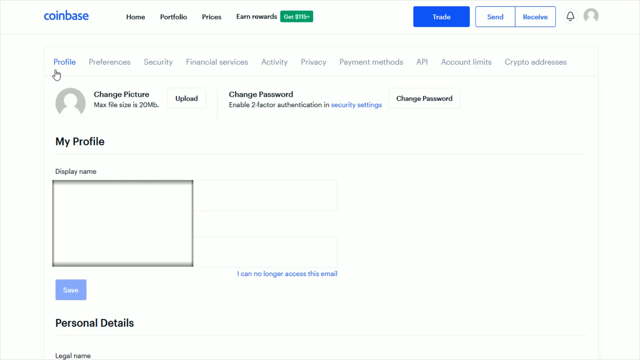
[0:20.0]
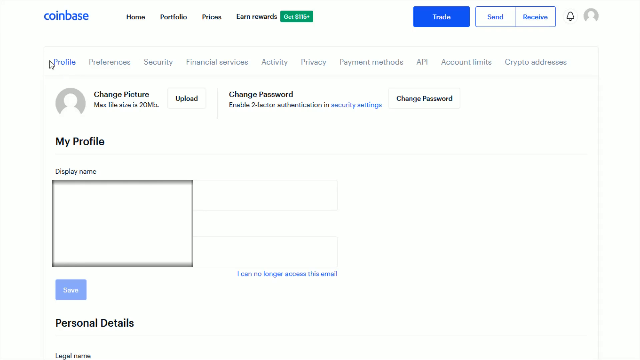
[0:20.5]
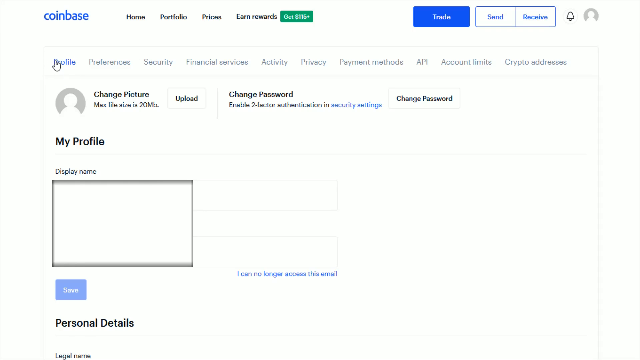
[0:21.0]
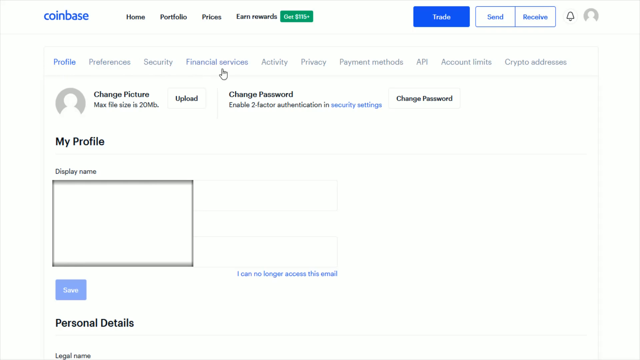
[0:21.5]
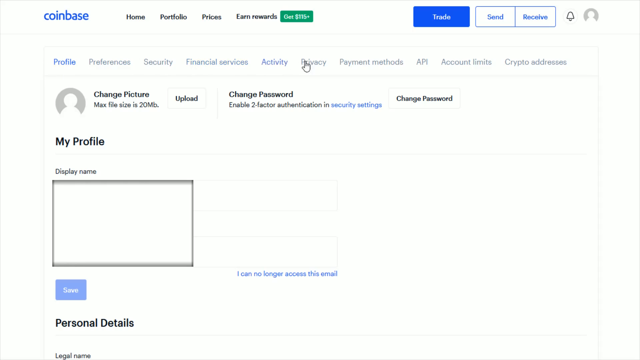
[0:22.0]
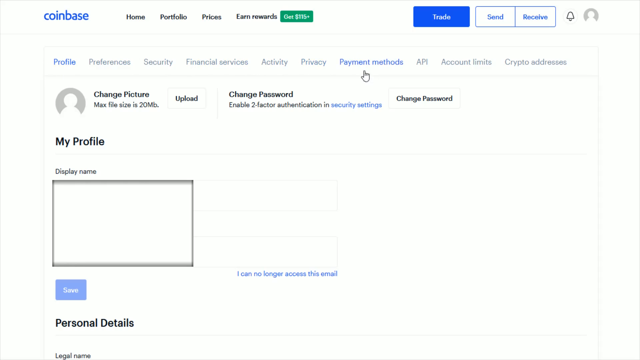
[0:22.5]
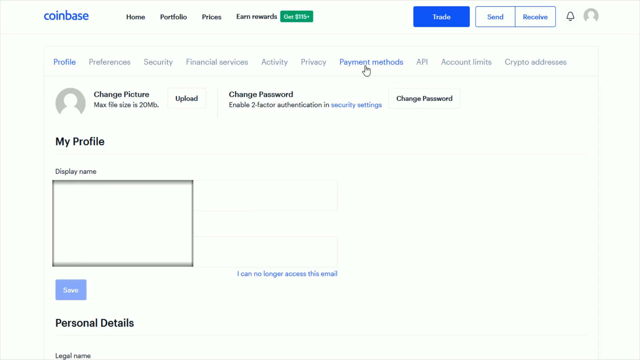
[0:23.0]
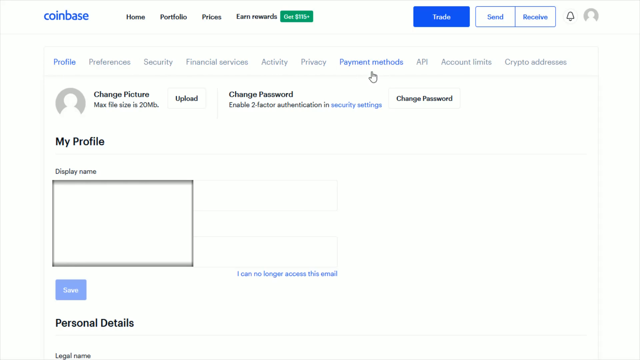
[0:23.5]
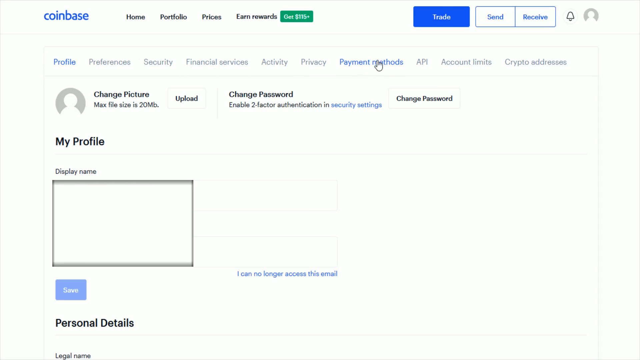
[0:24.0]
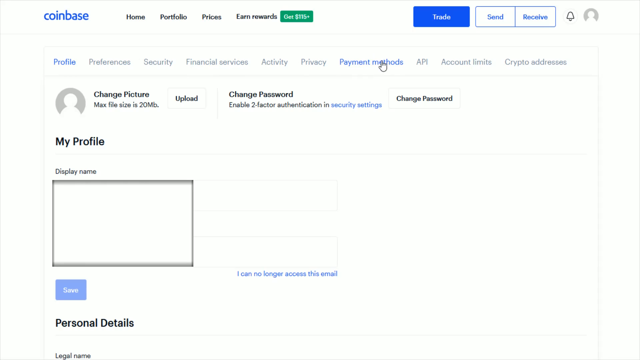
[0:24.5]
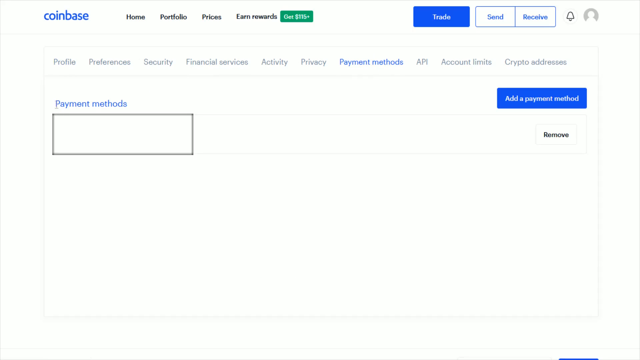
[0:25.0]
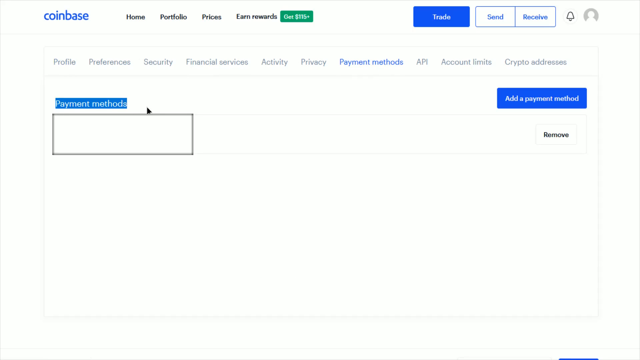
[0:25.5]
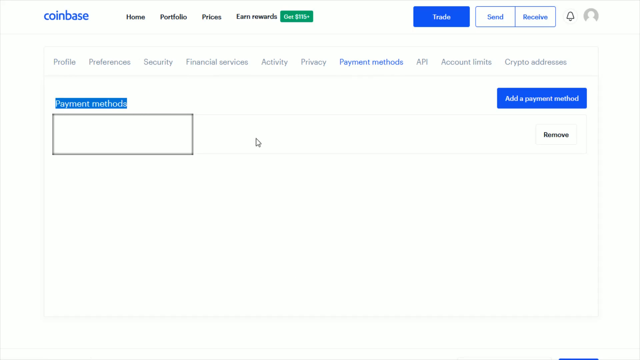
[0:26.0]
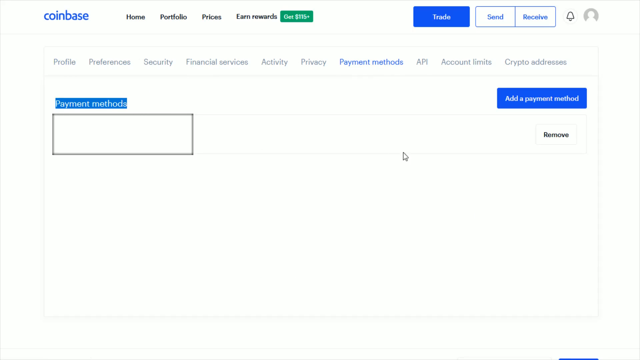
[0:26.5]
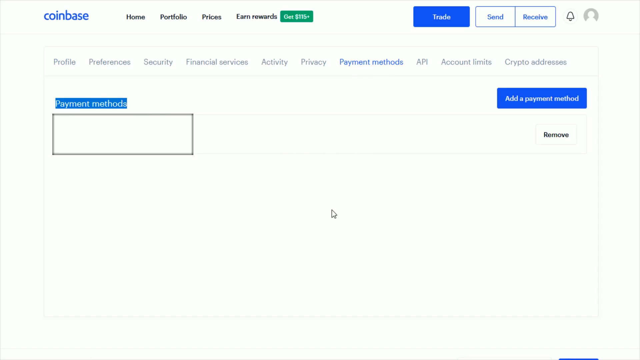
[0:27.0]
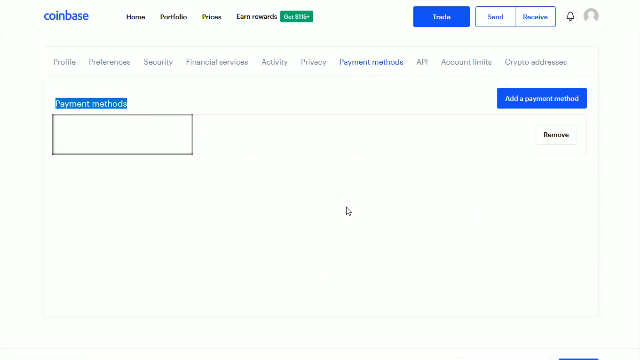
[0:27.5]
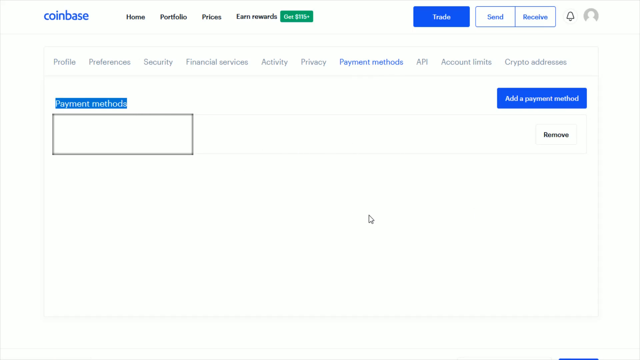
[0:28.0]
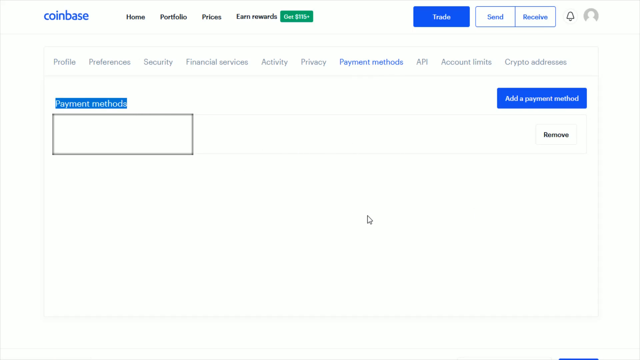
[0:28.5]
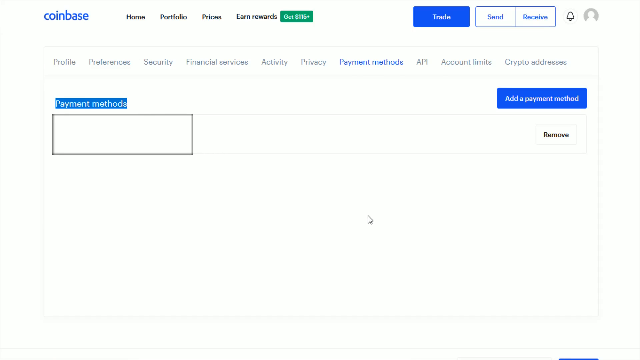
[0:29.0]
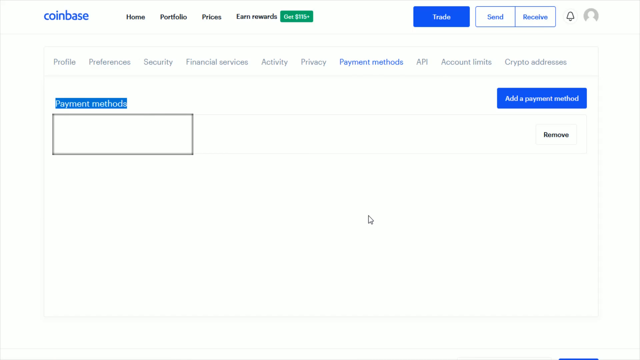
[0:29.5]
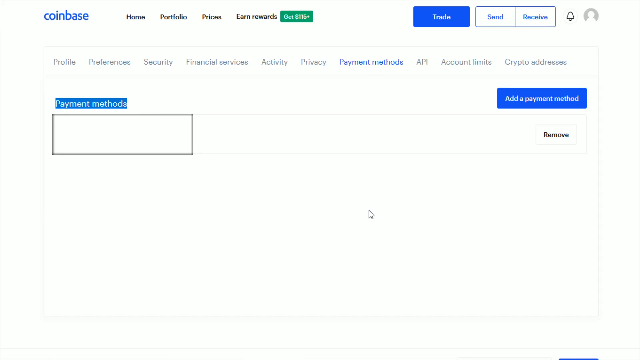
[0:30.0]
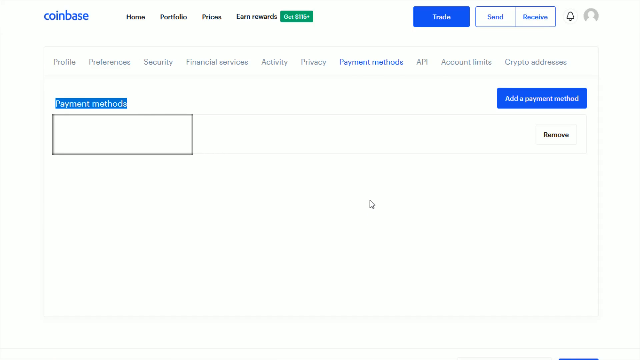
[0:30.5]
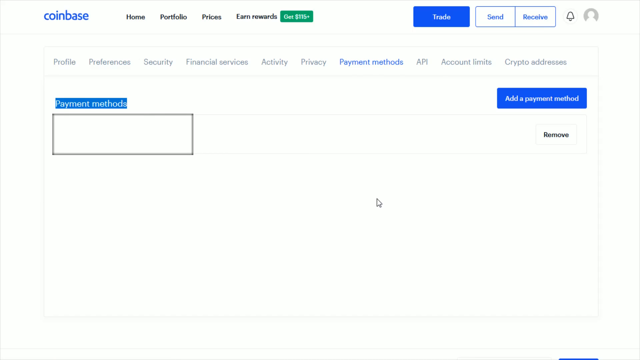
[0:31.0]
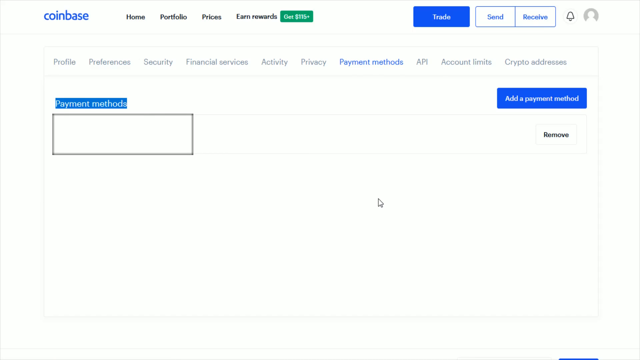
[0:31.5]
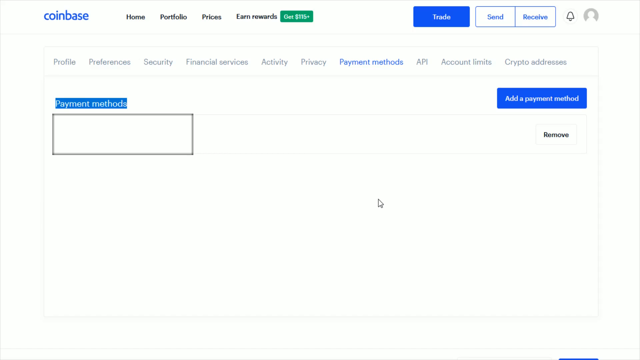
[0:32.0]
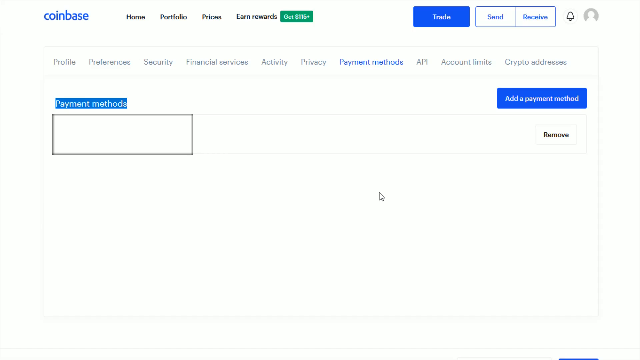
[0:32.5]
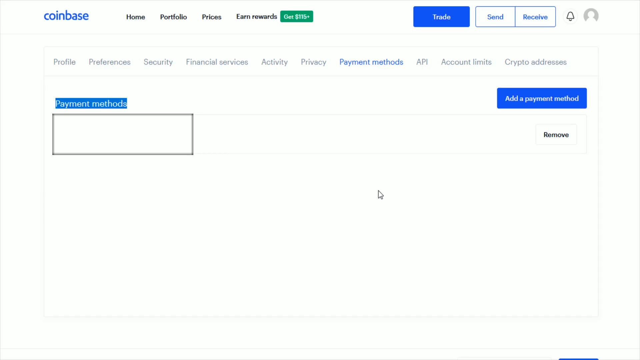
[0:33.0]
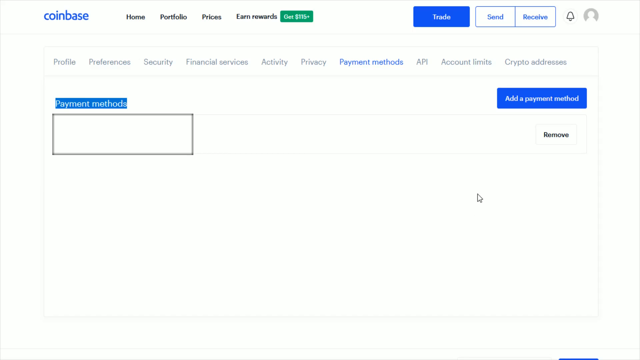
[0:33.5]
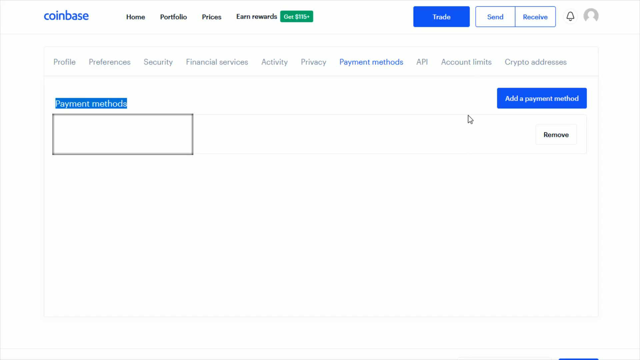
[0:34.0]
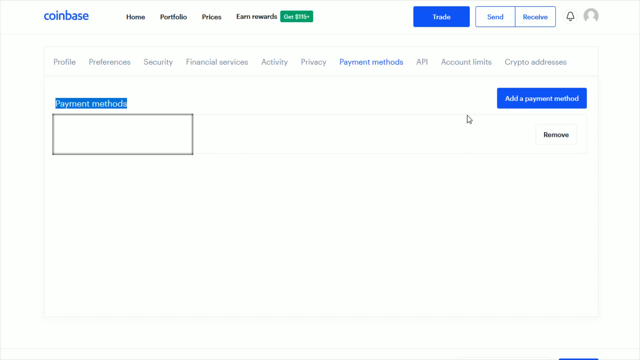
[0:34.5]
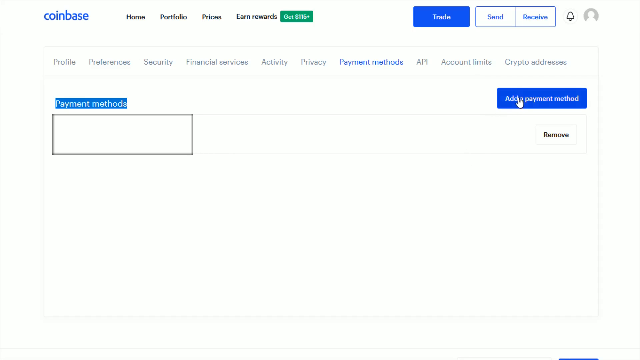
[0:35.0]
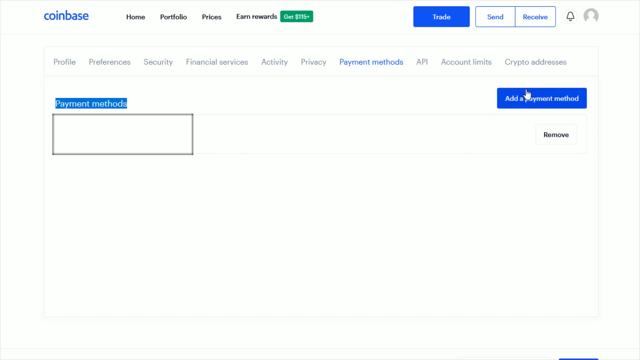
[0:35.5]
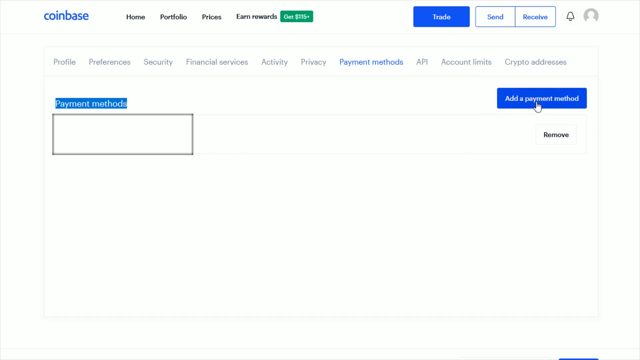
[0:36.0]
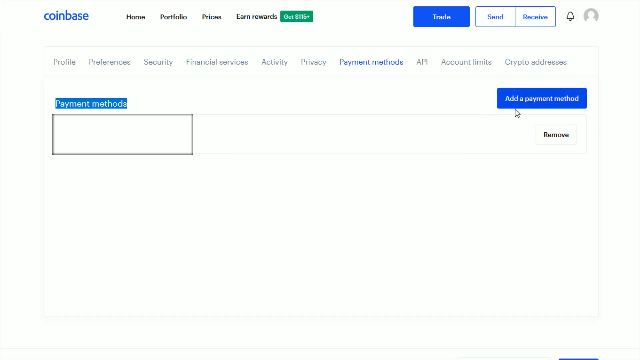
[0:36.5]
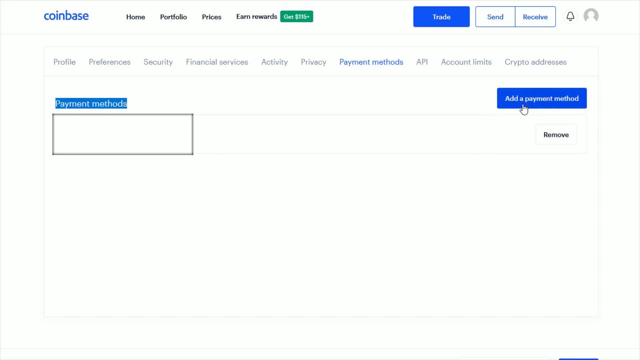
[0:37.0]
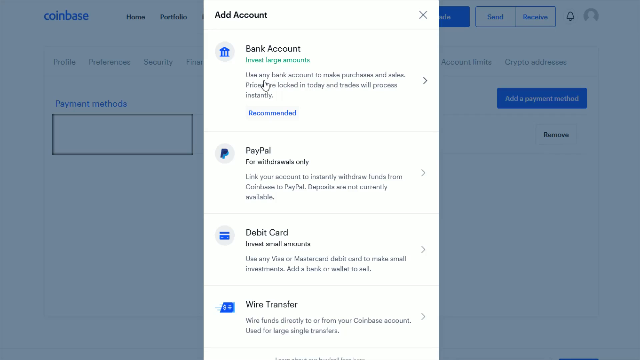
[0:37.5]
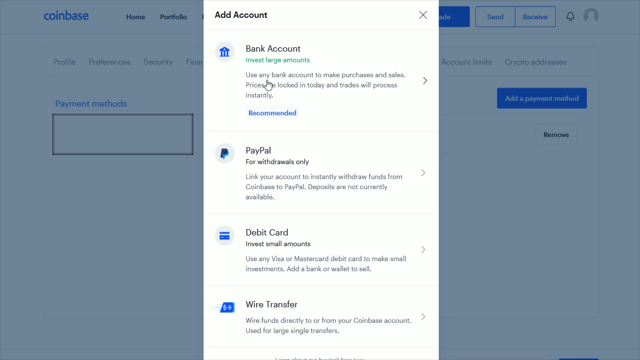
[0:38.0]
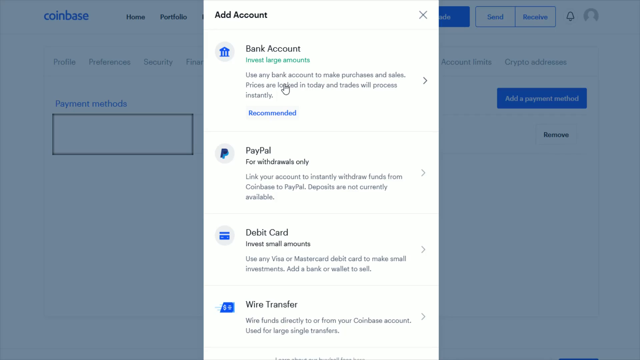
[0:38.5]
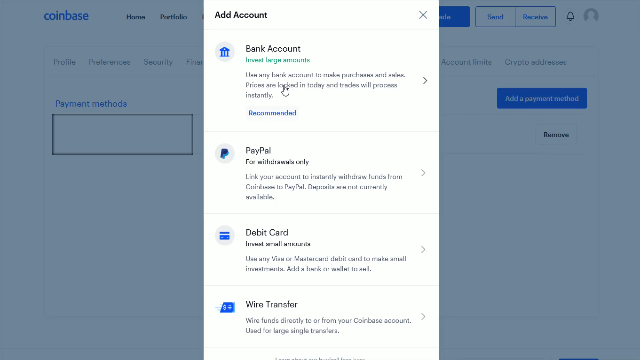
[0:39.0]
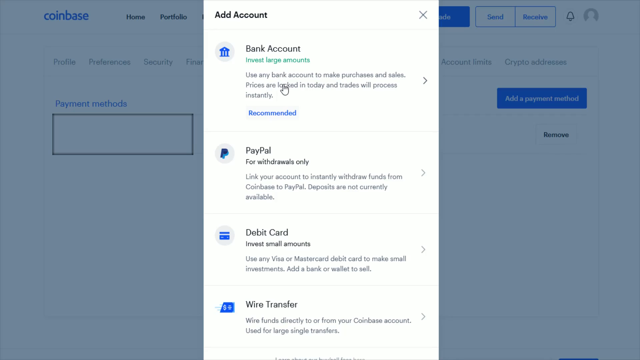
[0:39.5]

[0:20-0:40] The profile icon at the top right is clicked, settings are opened, and the cursor hovers over payment methods. After payment methods is clicked, the payment method title is highlighted, and on the next page the cursor hovers over the option to add an additional payment method. A pop-up appears with multiple choices: bank account, PayPal, debit card, or wire transfer. The Coinbase screen recording is unchanged, with a white background, many blue titles, and the Coinbase logo at the top left.